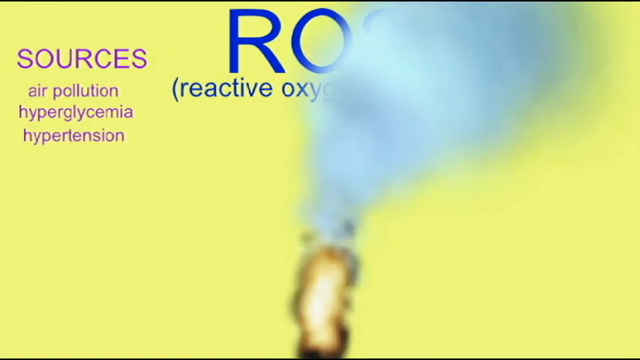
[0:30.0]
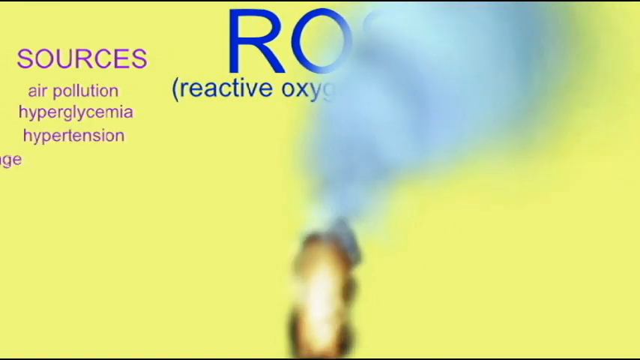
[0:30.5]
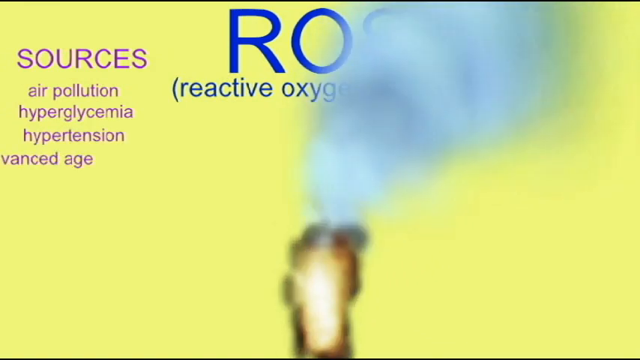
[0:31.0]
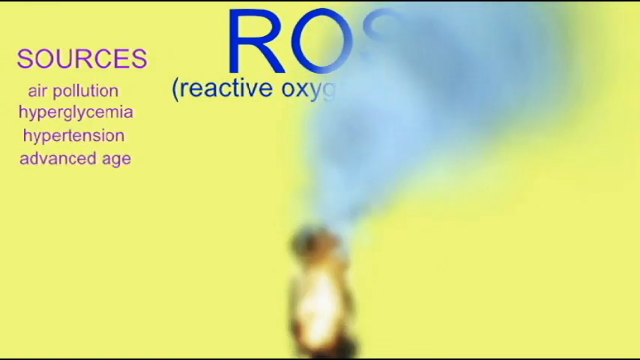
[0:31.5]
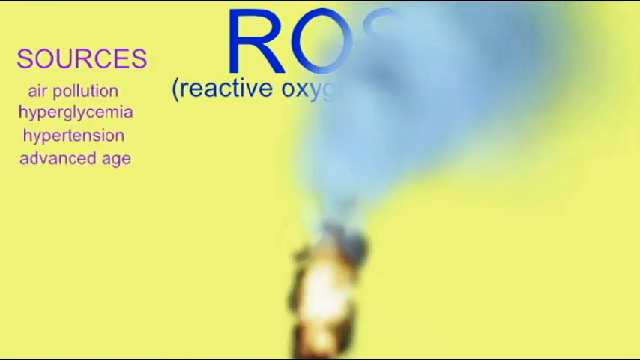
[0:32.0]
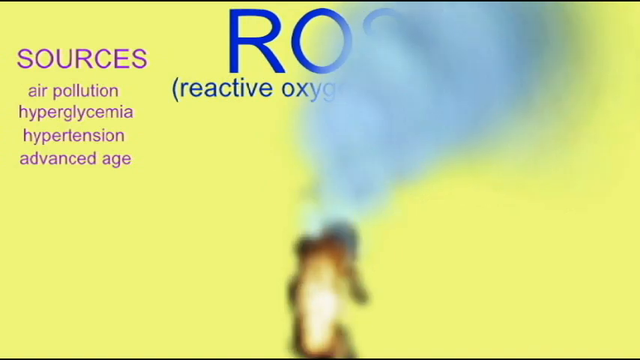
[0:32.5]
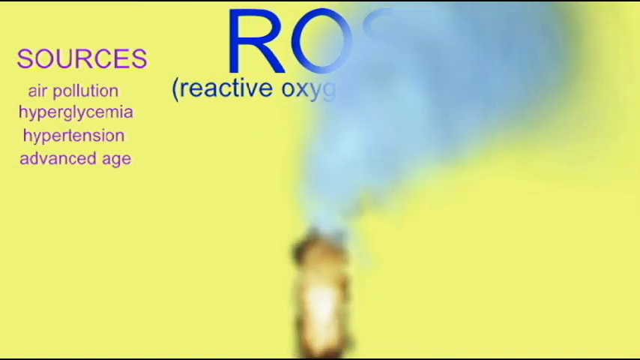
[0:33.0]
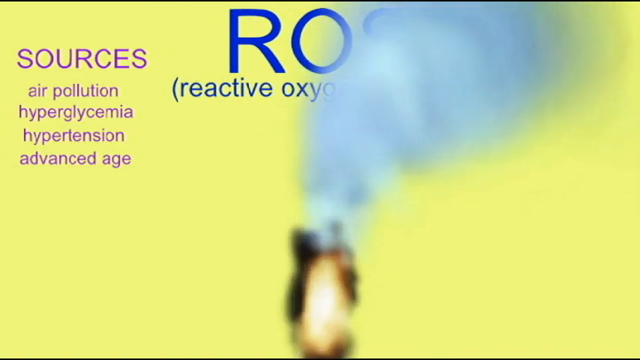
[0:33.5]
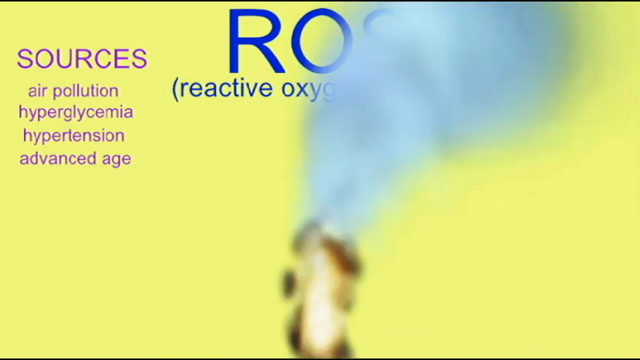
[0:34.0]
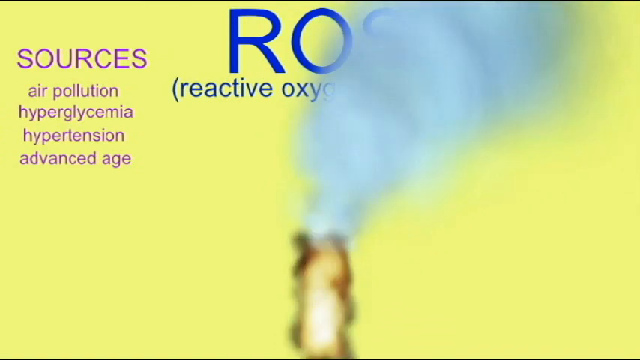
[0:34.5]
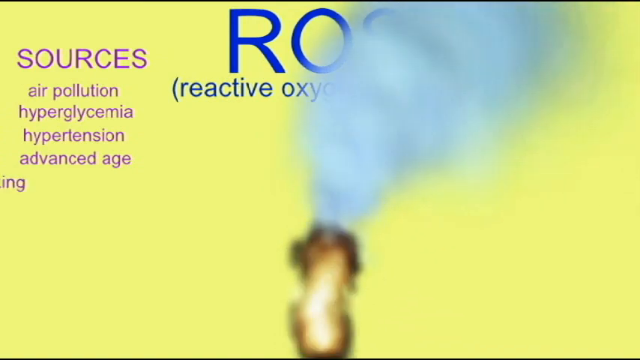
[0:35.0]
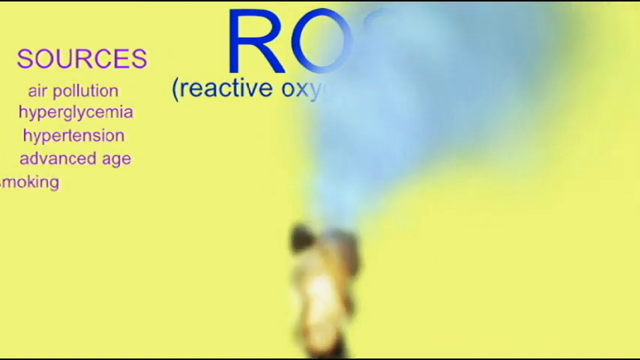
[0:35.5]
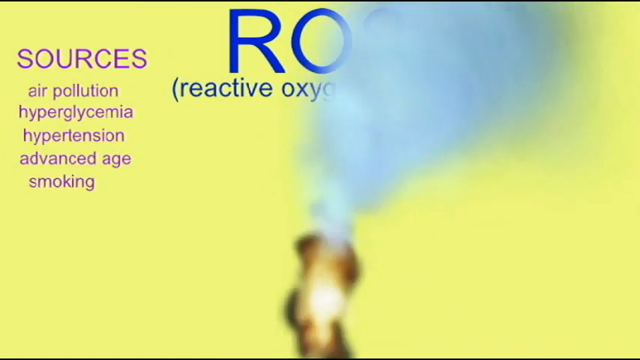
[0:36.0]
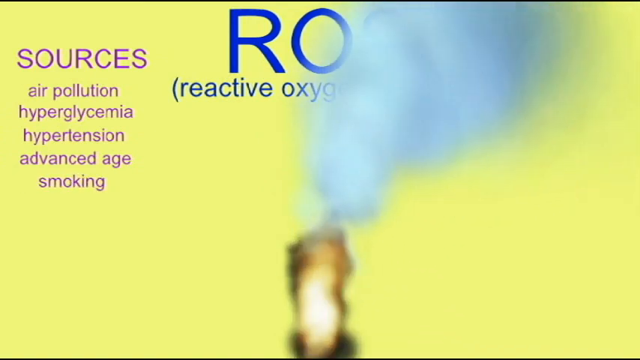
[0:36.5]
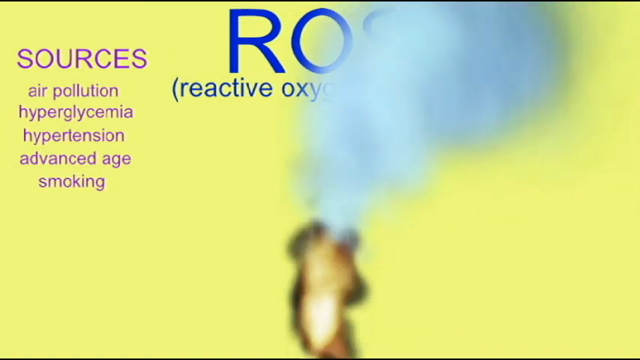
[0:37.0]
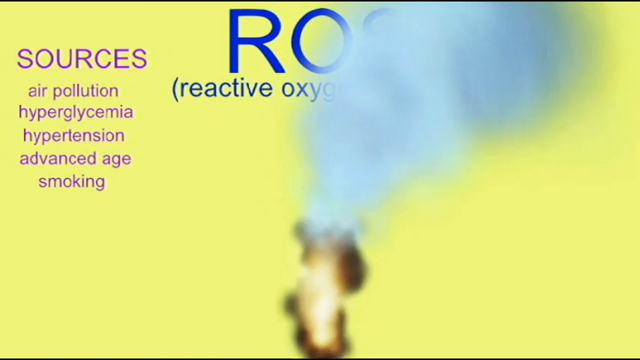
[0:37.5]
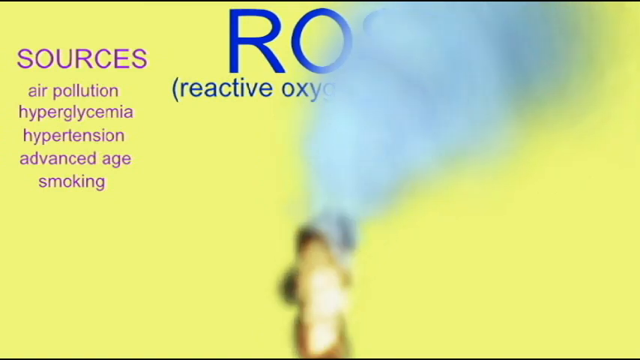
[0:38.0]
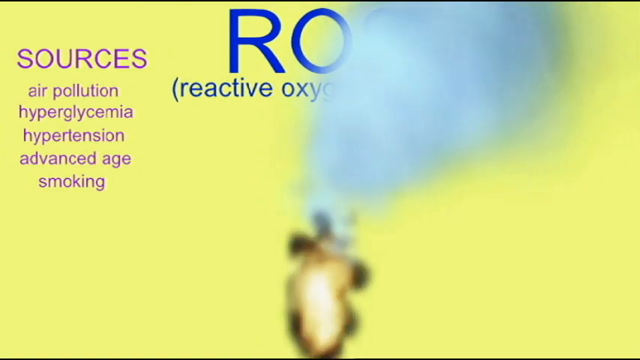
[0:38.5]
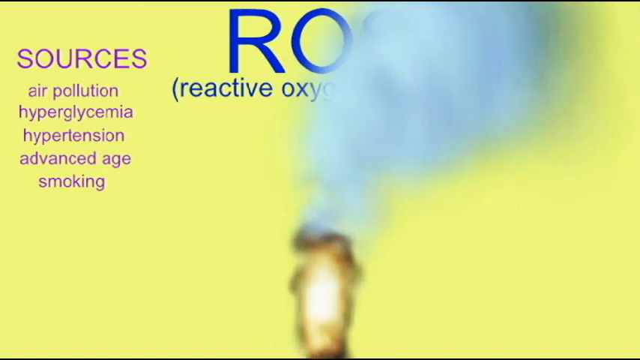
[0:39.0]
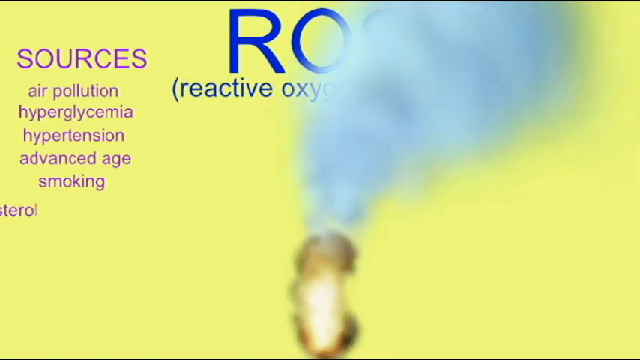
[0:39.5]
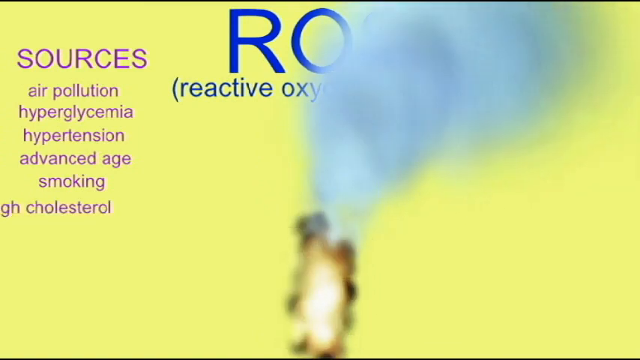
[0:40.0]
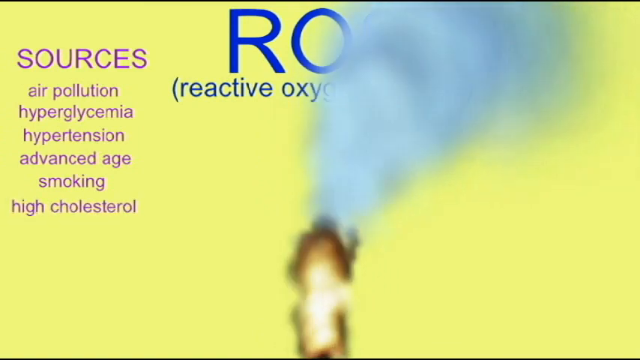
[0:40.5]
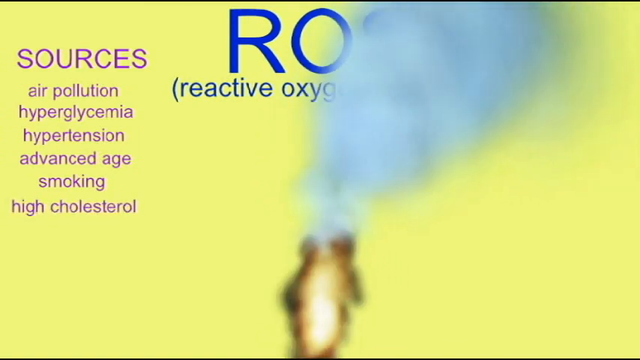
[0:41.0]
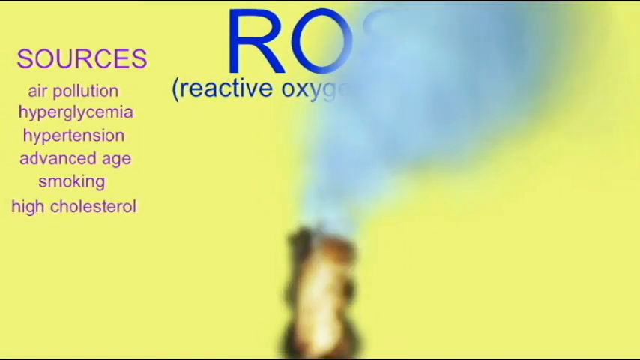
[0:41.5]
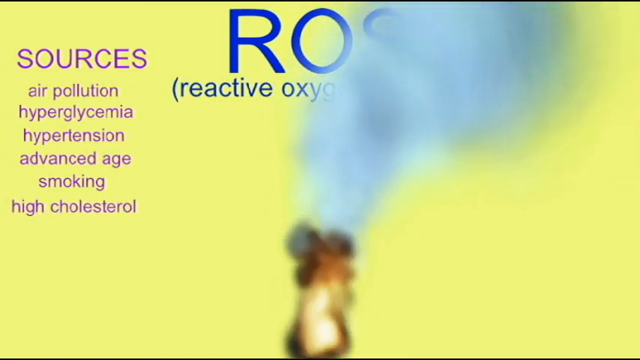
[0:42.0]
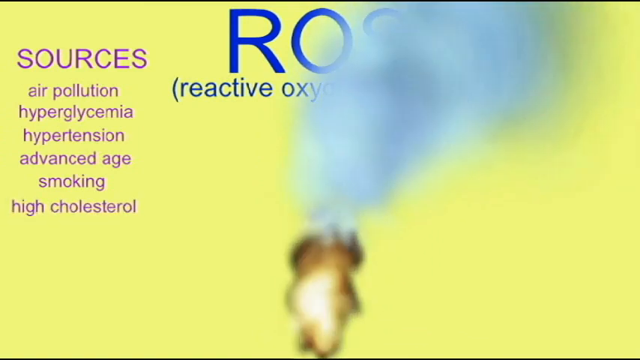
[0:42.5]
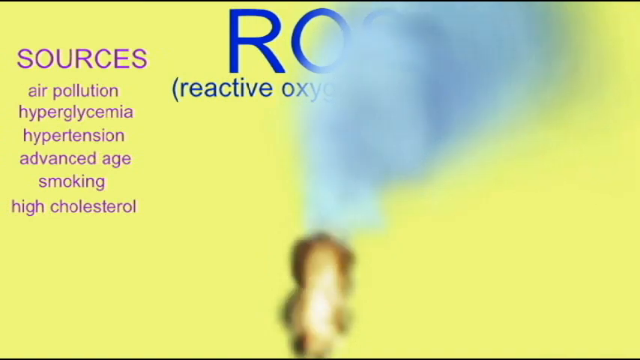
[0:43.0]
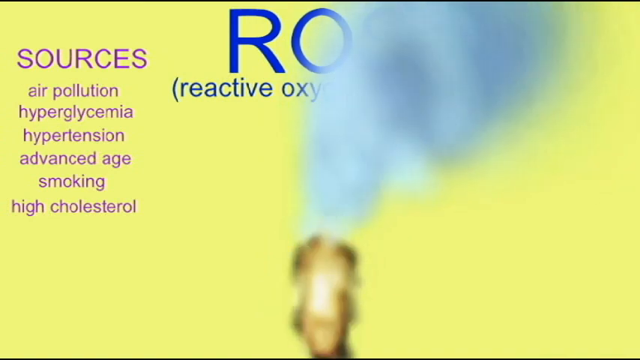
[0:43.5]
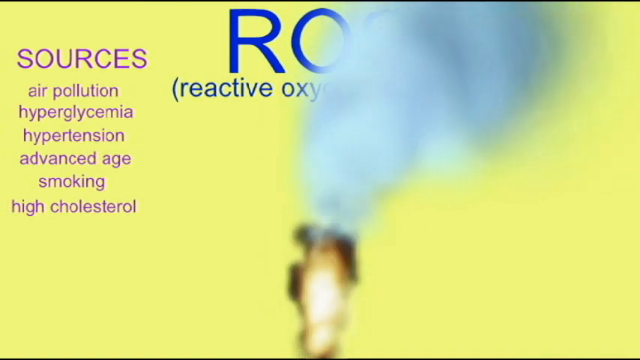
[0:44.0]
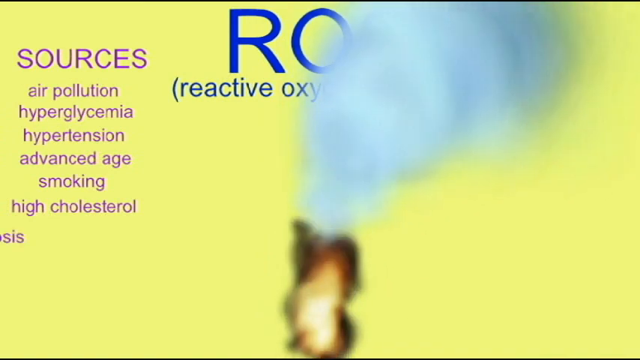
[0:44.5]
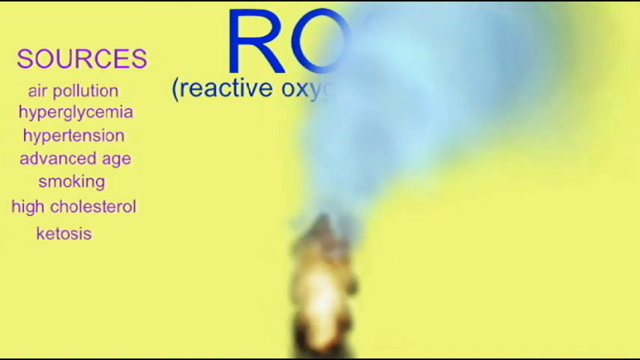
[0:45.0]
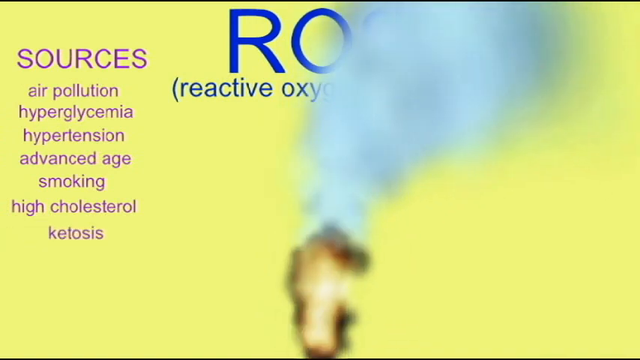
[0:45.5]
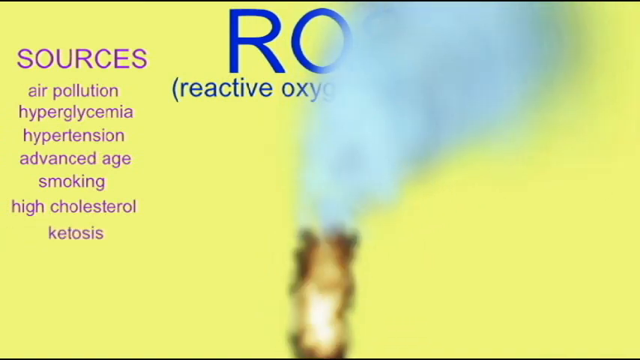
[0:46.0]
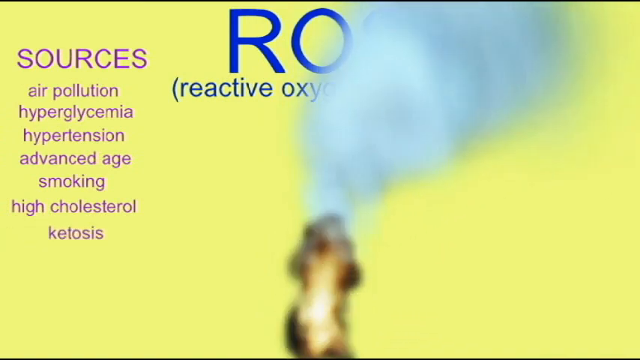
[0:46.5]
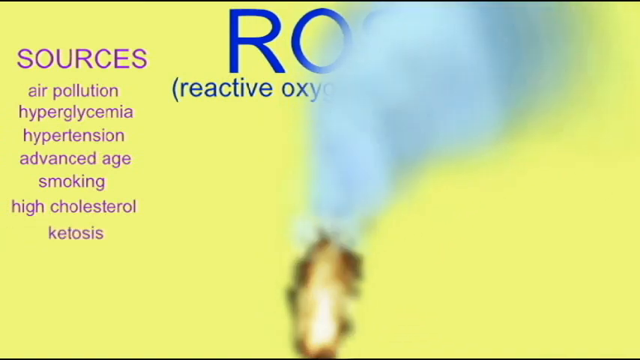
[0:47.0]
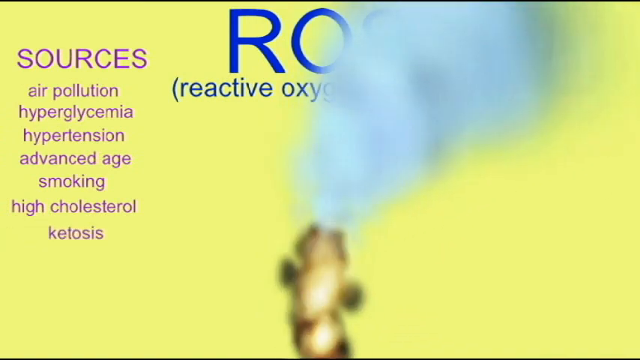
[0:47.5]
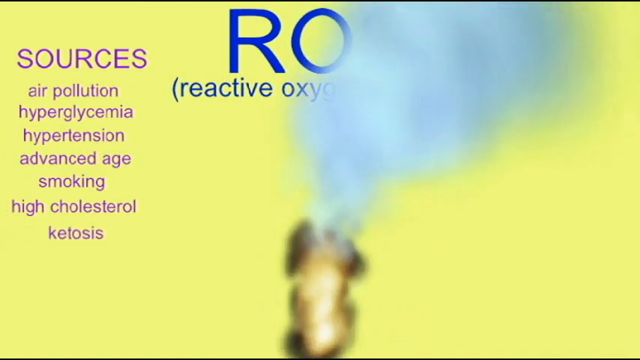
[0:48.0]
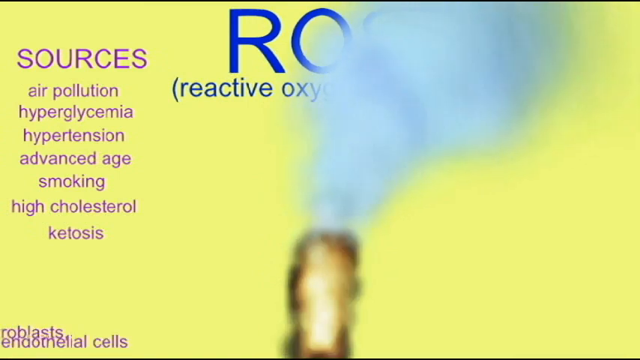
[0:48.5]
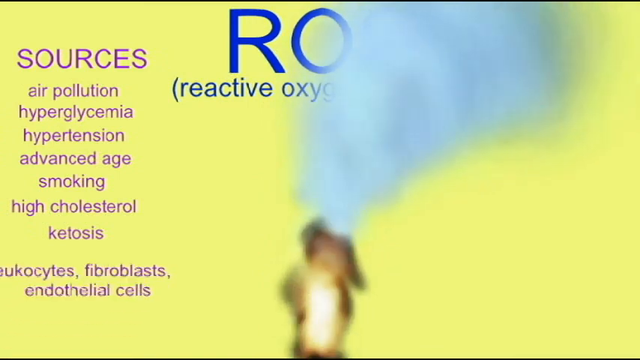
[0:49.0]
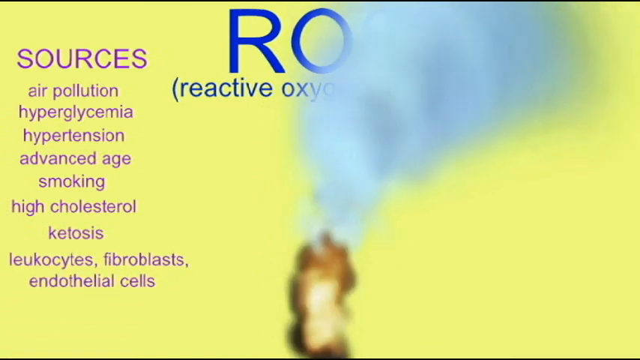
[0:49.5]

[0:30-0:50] Against a yellow background, a single flame burns at the bottom in the middle, and a plume of gray smoke rises until it reaches the top of the frame. Text is to the left of the plume. At the very top is the largest text, in blue, with the letters "ROS." Beneath it is smaller text in parentheses that reads "REACTIVE OXYGEN." To the left is medium-sized lavender text reading "sources," and below that, in lavender, are the words "air pollution, hyperglycemia, hypertension, advanced age," continuing with "smoking," "high cholesterol," and "ketosis." The flame keeps burning in the middle of the frame at the bottom, and sort of grayish smoke billows upward and to the right over the yellow background.